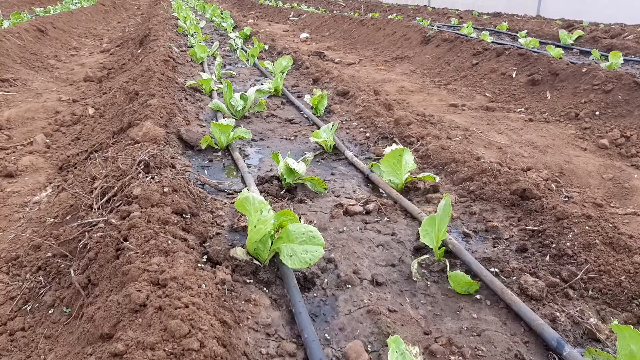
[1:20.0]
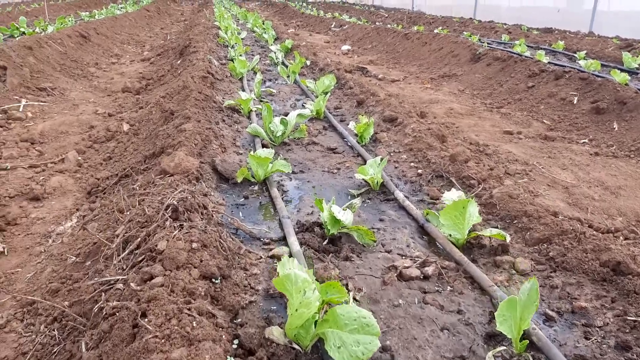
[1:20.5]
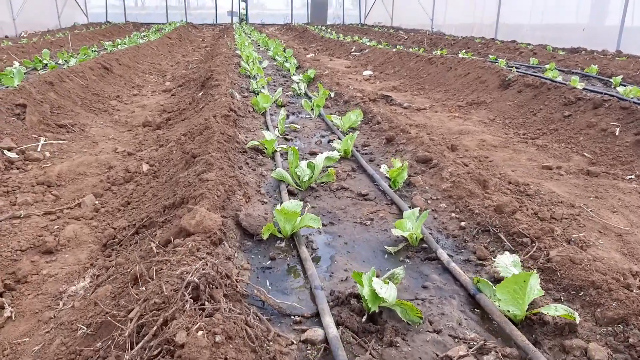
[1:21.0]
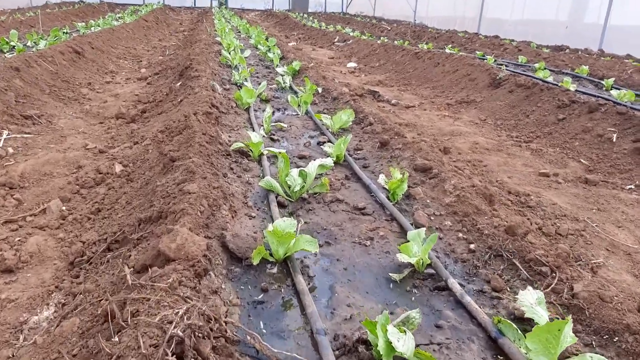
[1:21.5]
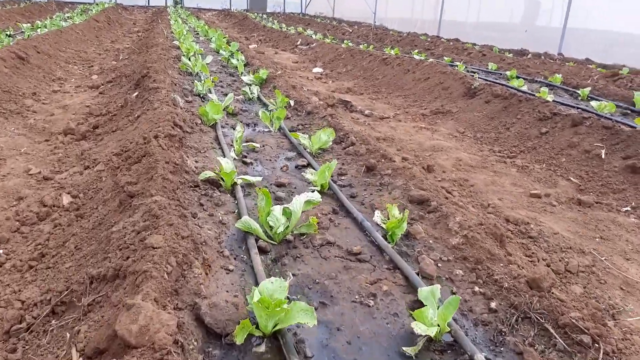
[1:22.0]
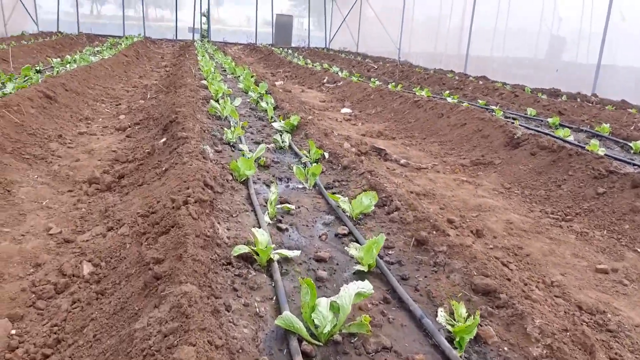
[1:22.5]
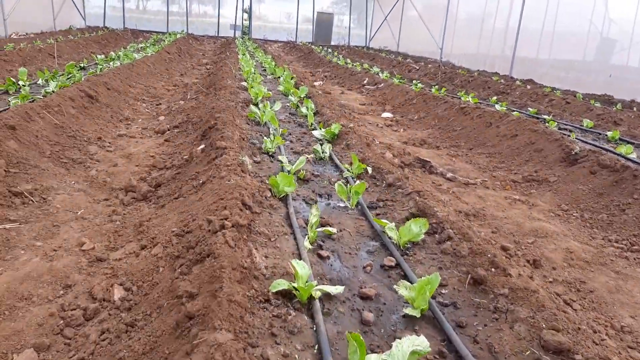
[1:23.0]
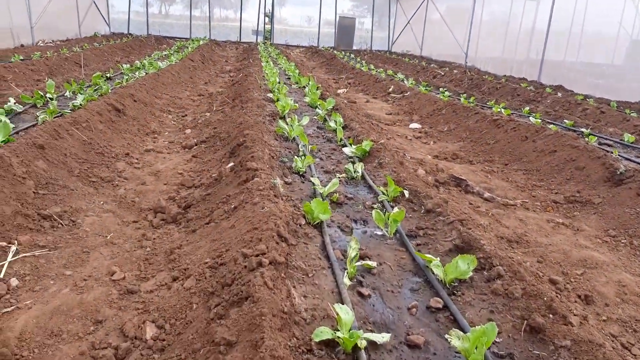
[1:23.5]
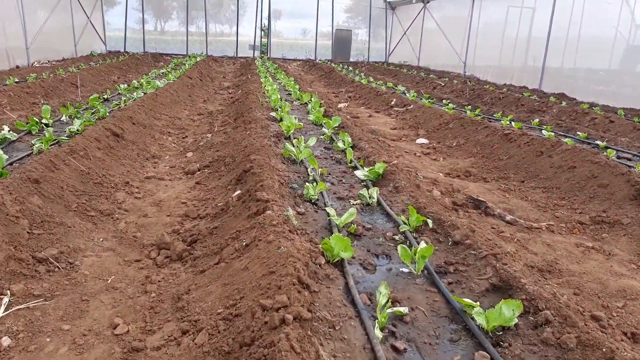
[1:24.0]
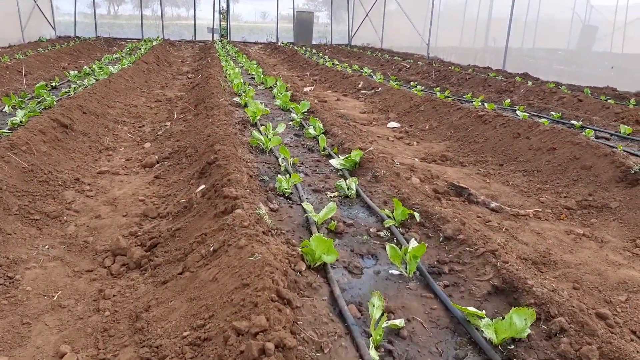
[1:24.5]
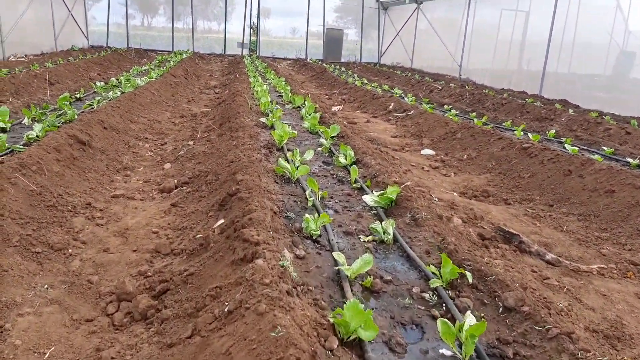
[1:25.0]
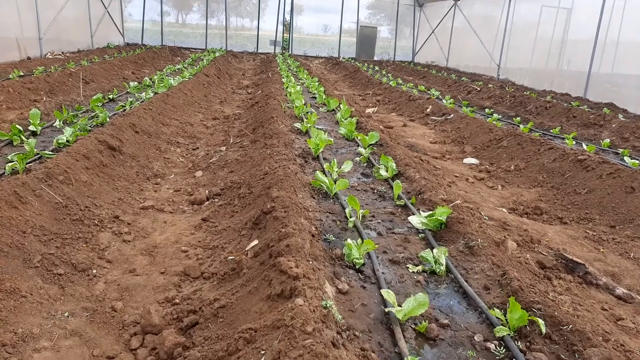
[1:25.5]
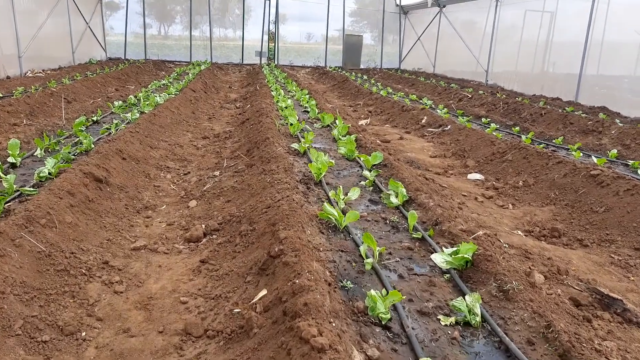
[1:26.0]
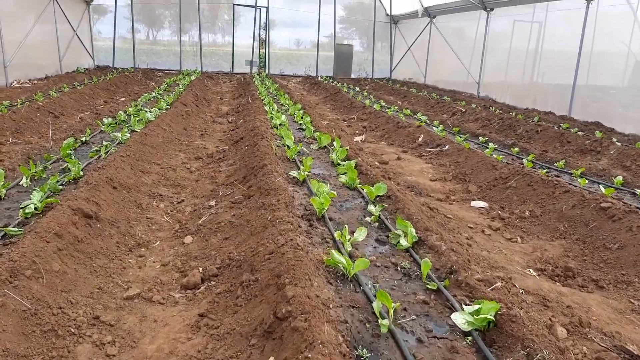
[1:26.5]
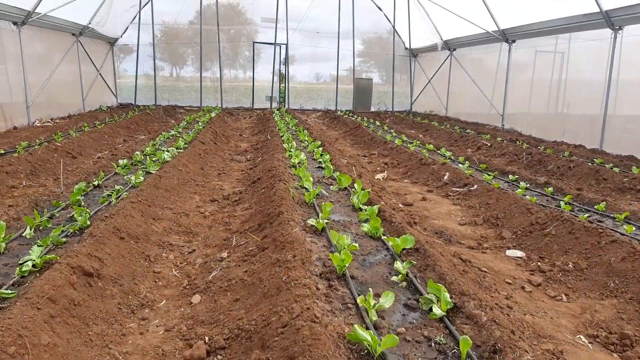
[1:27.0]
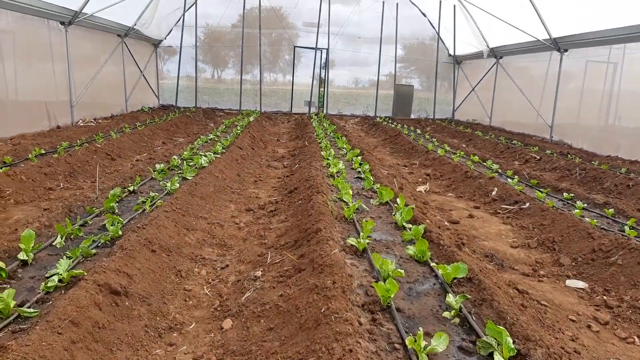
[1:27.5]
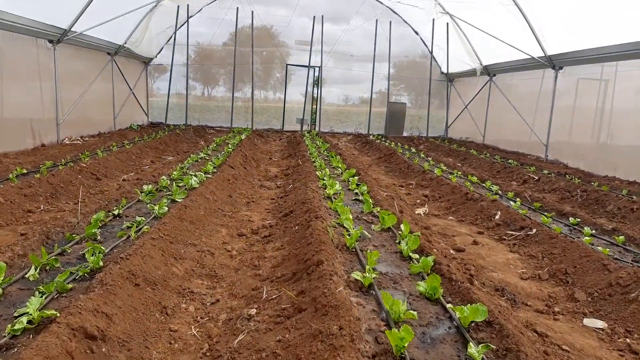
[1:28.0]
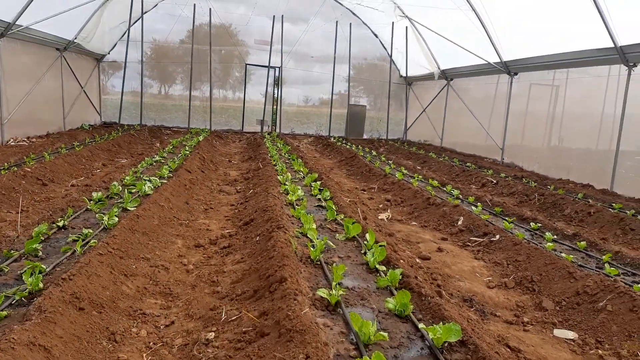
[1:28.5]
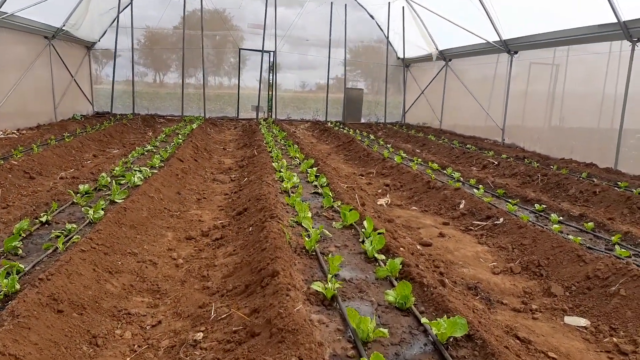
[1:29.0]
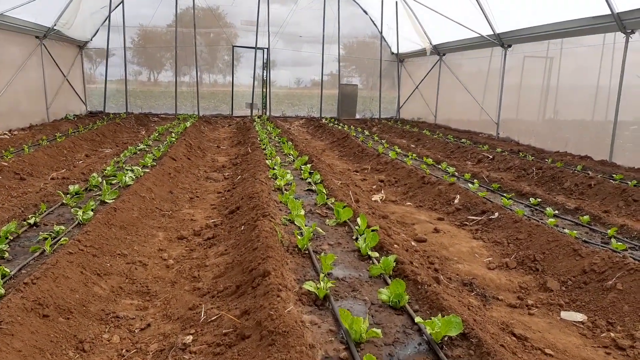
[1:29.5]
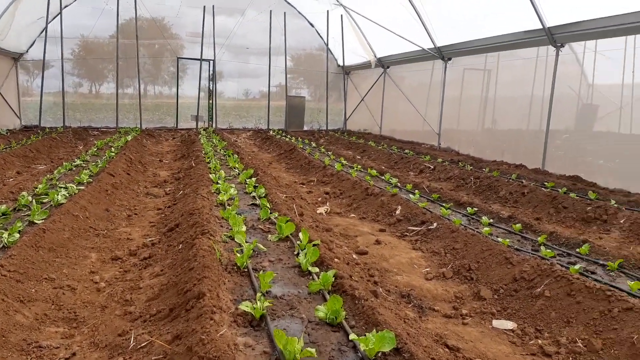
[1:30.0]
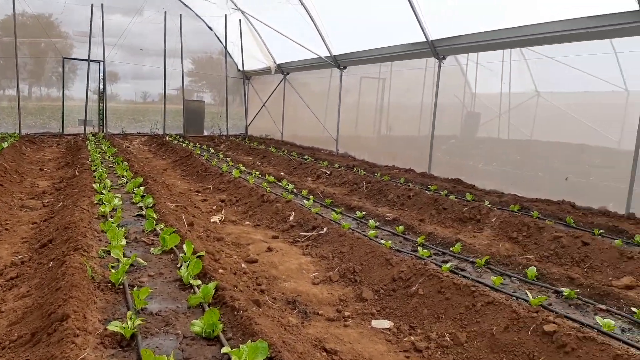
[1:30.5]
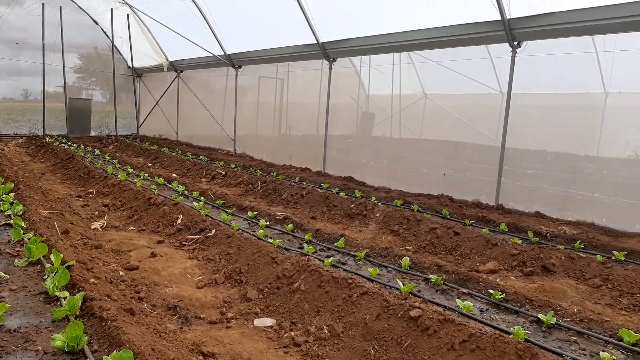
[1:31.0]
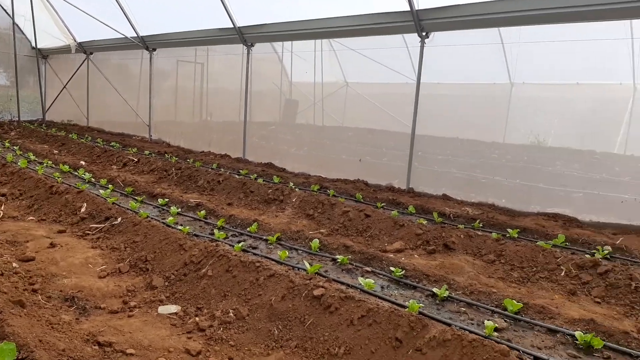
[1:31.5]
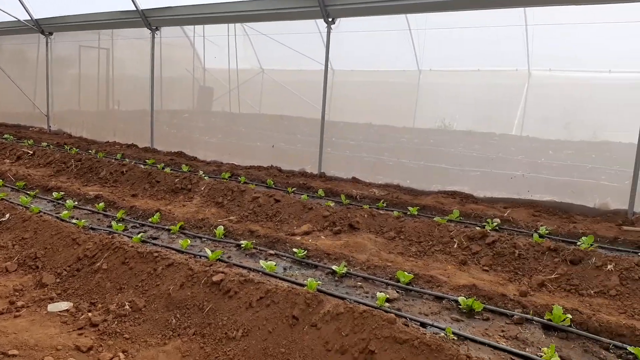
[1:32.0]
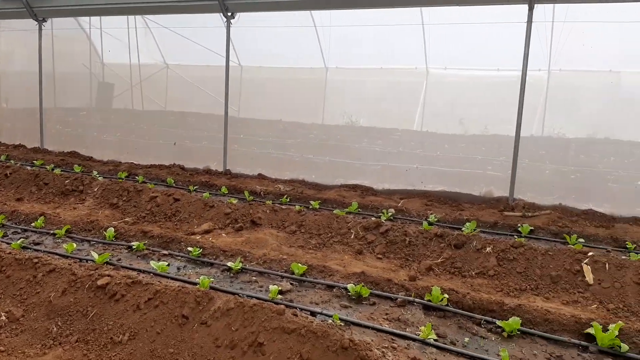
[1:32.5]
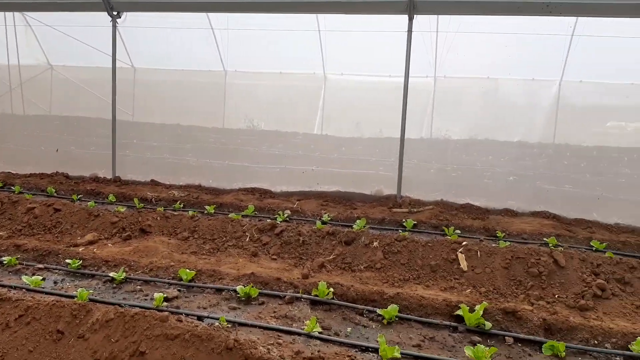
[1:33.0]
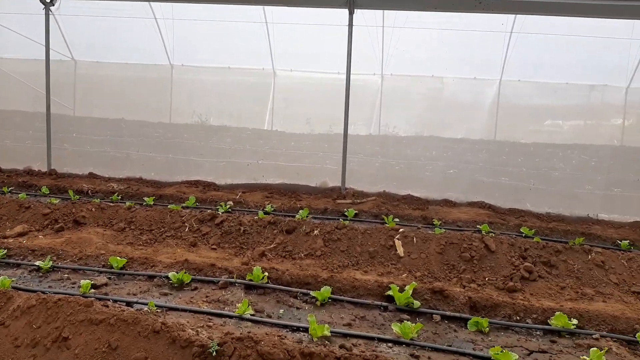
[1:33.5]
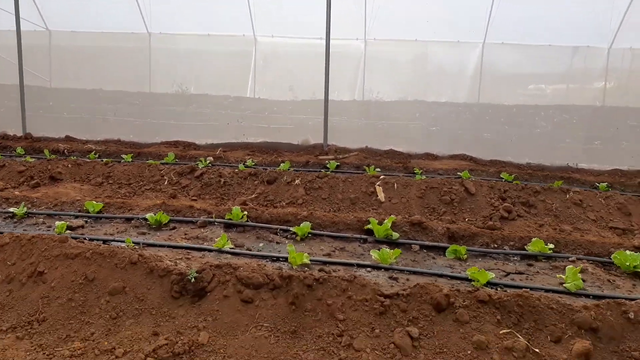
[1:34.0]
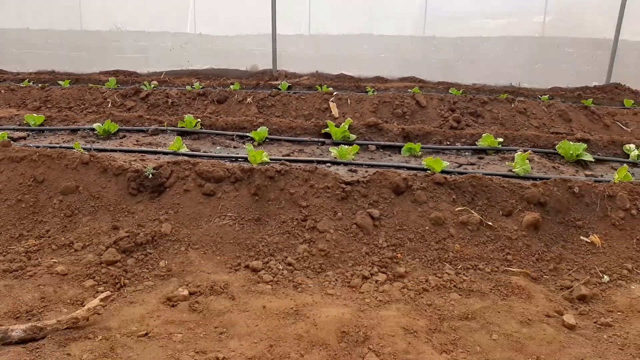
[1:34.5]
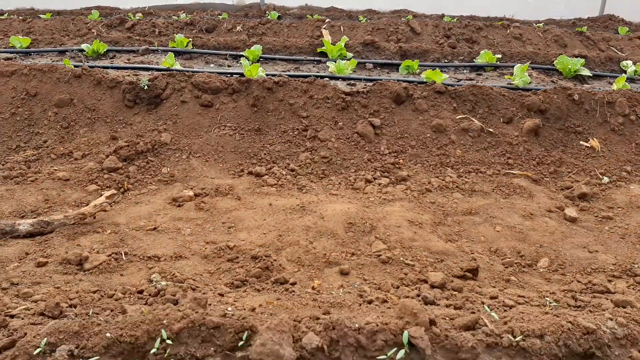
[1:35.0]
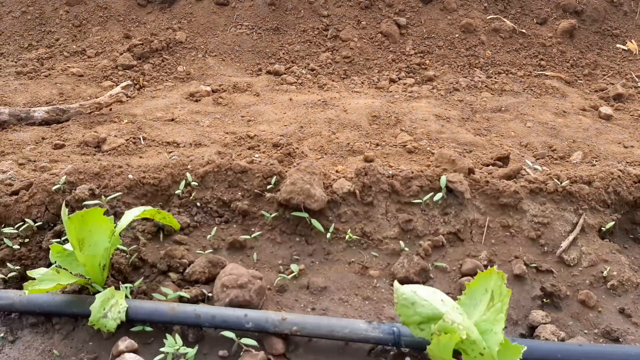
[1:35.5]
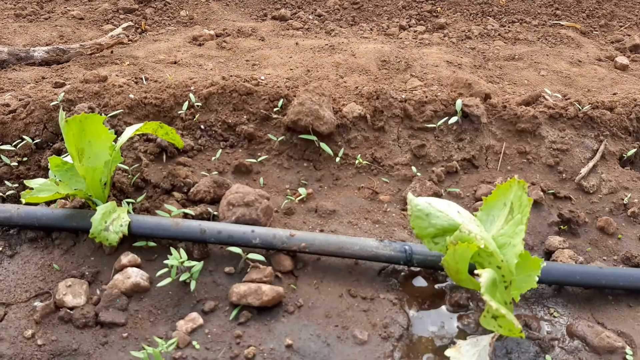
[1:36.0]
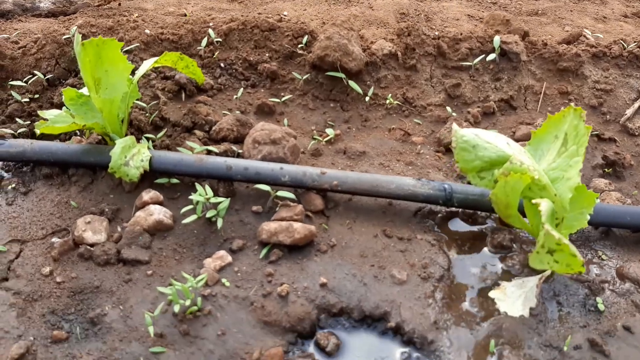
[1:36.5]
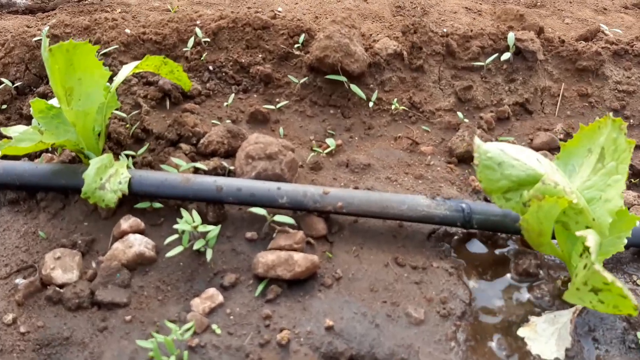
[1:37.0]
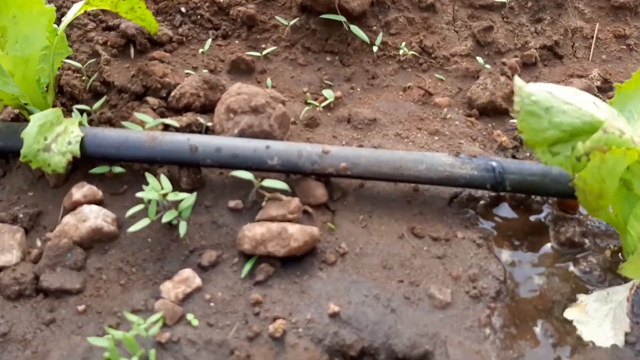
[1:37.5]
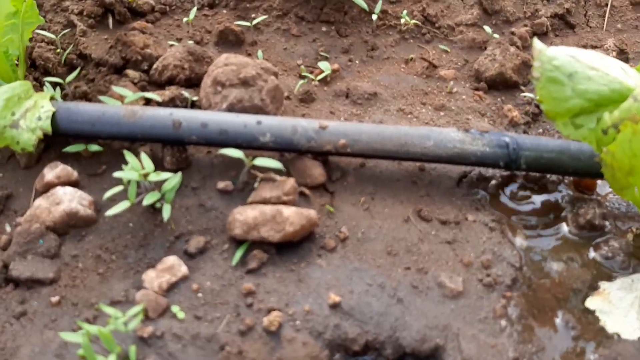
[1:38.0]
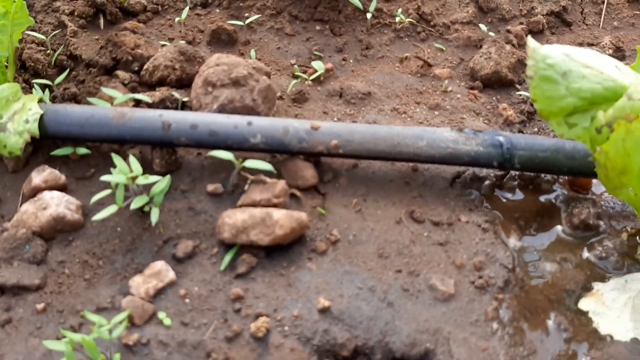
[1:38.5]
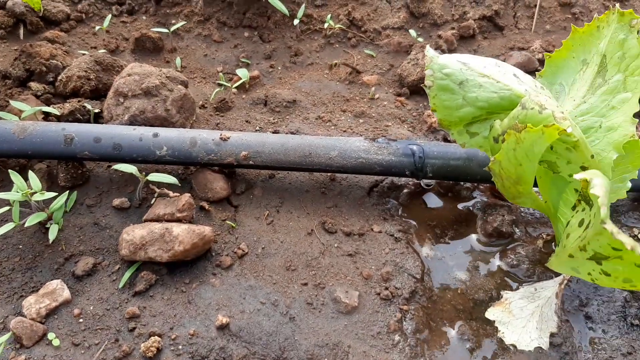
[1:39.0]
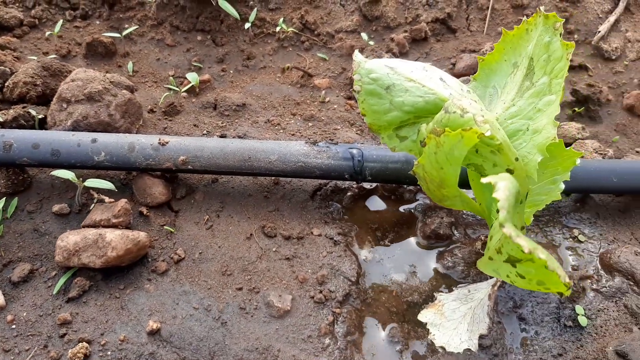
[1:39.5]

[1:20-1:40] Inside a nursery or greenhouse, the cameraman holds the camera and walks the length of the greenhouse between the rows of planted vegetation, taking small, slow steps. There are four rows of planted seedlings, all the same and the same size, spaced apart uniformly, with rows of dirt between each long row. Running parallel and very near to the seedlings is a water delivery system of small pipes running the length of the nursery. A close-up at one point shows these pipes delivering water to the plants. What looked like black plastic lining is actually dirt that is darker brown because it is wet along those rows. The camera goes to a close-up of a sprouting plant, with a drop of water coming out of the pipe of the water delivery system right next to it.